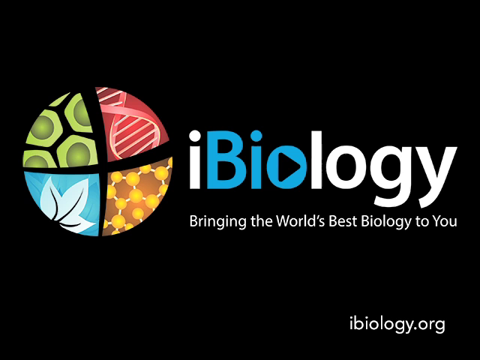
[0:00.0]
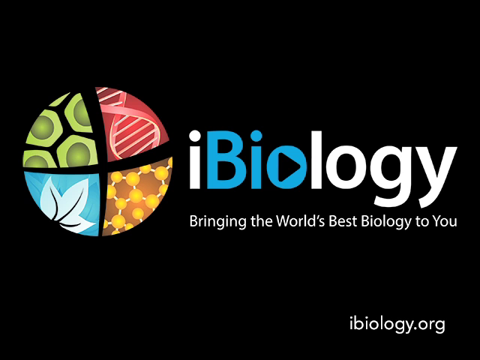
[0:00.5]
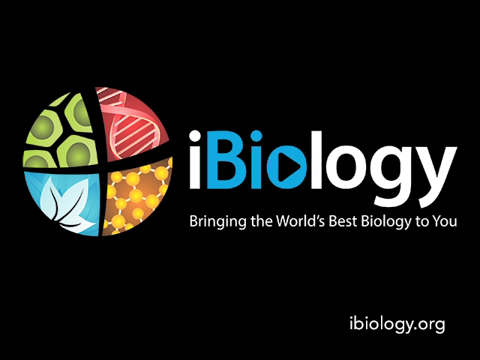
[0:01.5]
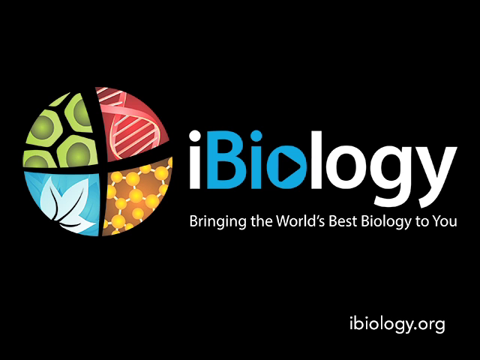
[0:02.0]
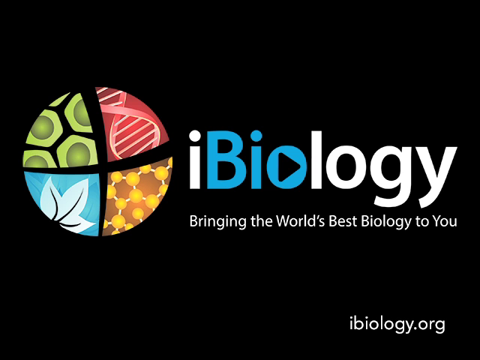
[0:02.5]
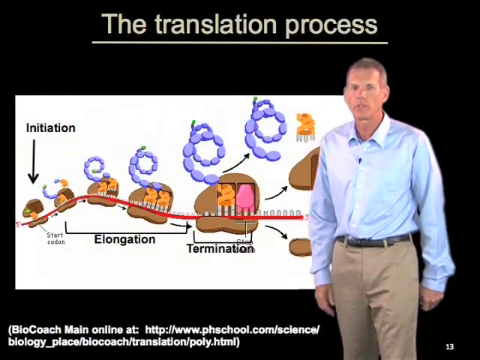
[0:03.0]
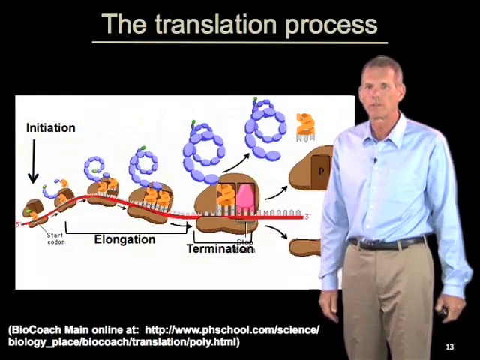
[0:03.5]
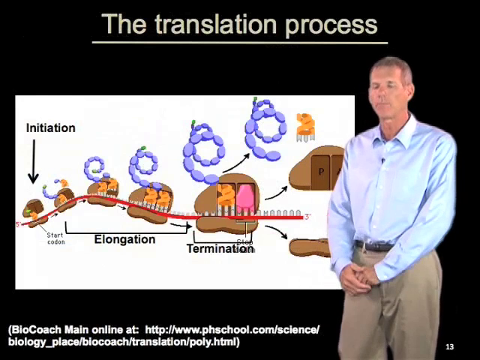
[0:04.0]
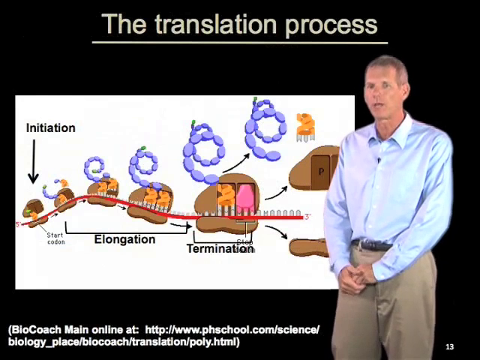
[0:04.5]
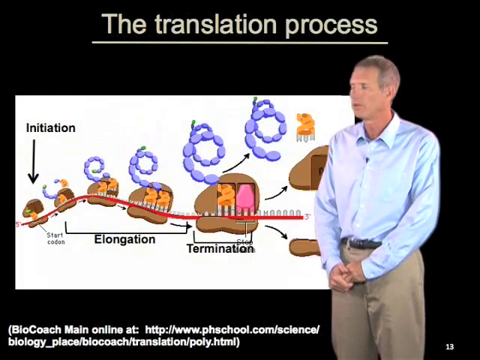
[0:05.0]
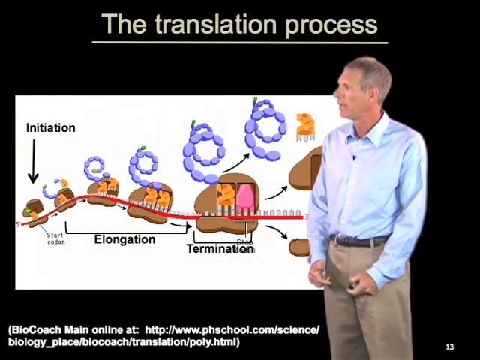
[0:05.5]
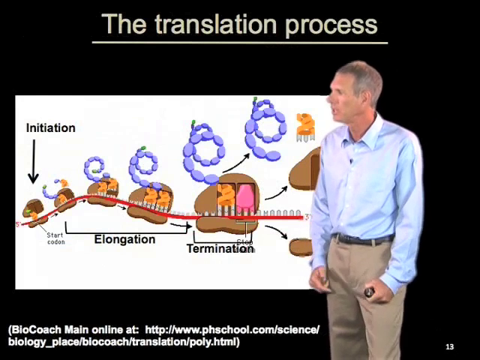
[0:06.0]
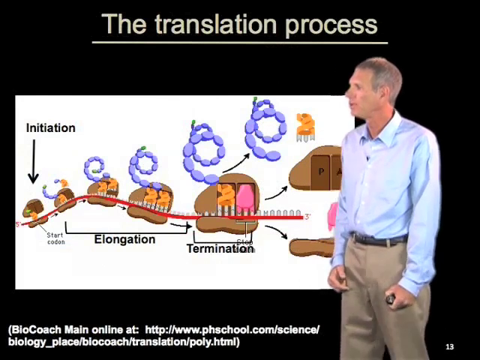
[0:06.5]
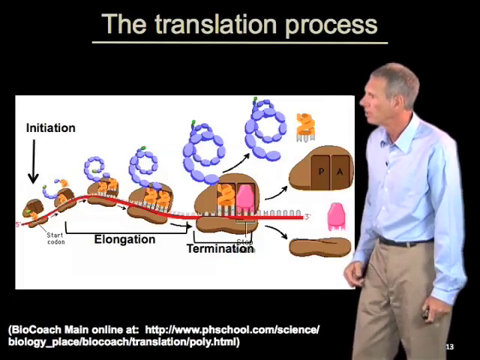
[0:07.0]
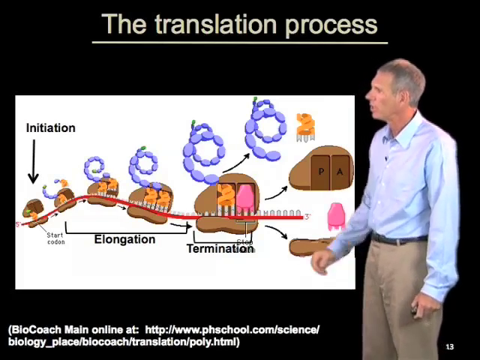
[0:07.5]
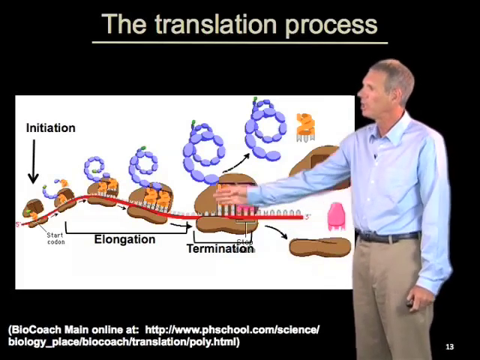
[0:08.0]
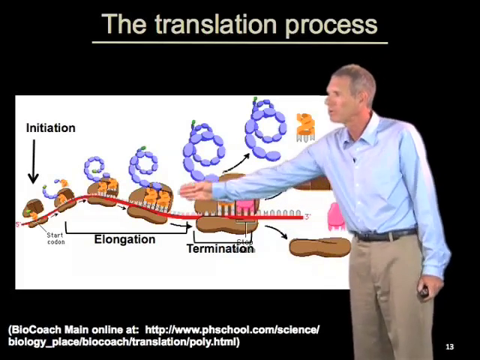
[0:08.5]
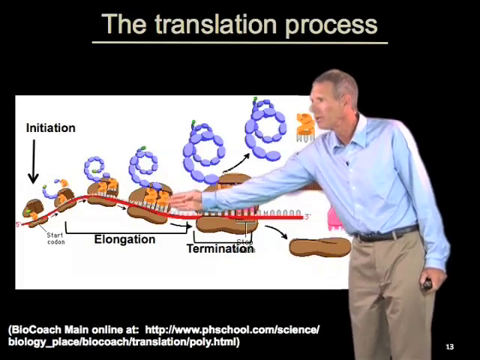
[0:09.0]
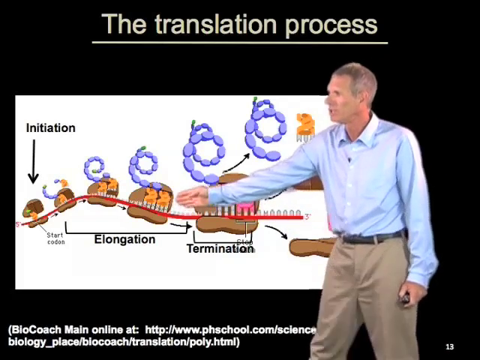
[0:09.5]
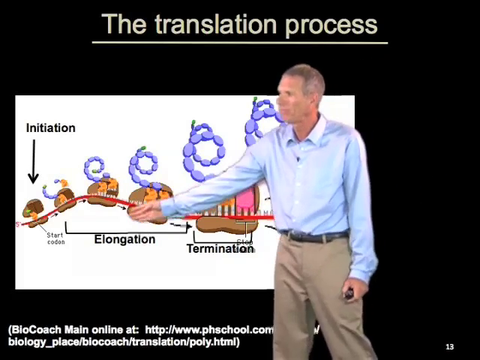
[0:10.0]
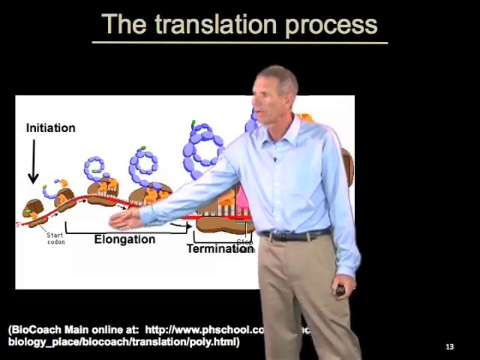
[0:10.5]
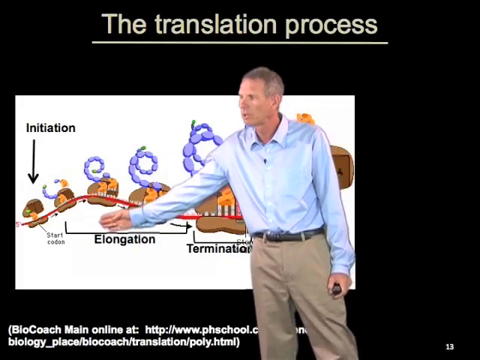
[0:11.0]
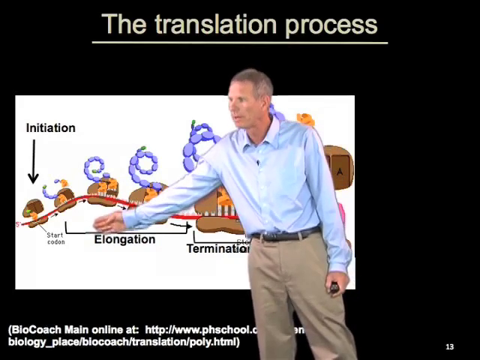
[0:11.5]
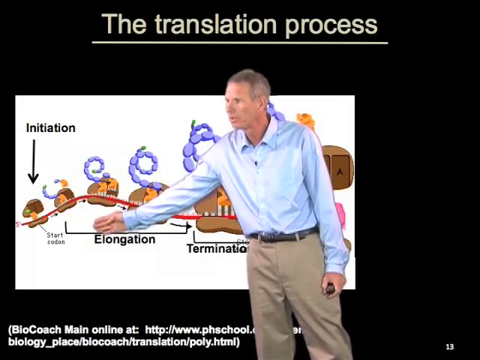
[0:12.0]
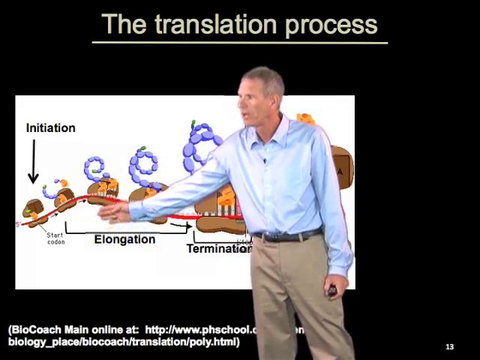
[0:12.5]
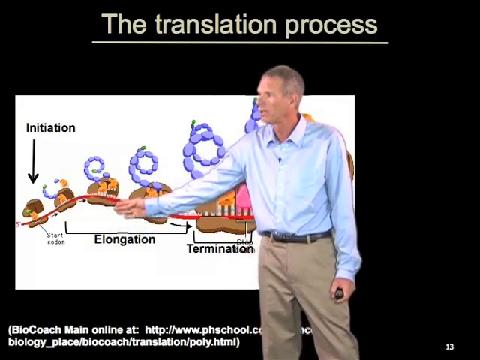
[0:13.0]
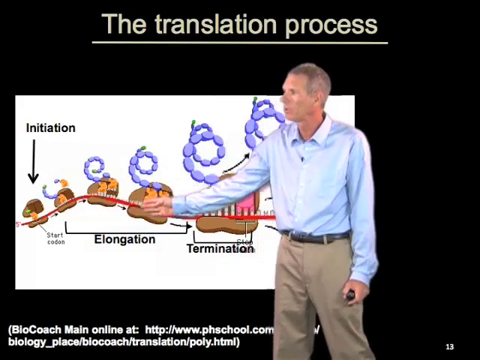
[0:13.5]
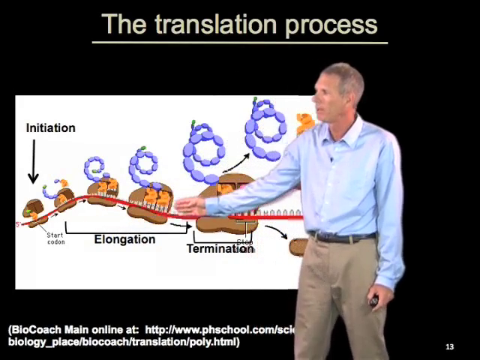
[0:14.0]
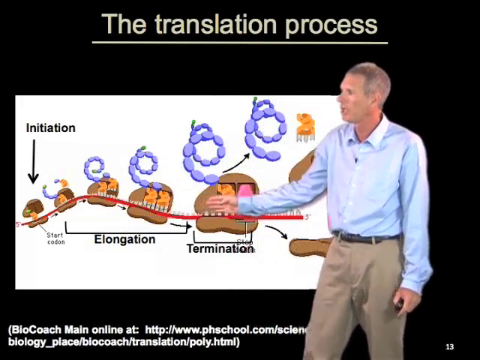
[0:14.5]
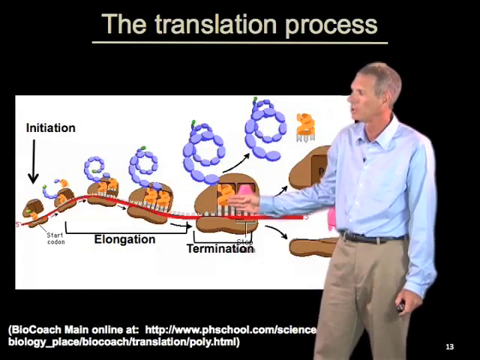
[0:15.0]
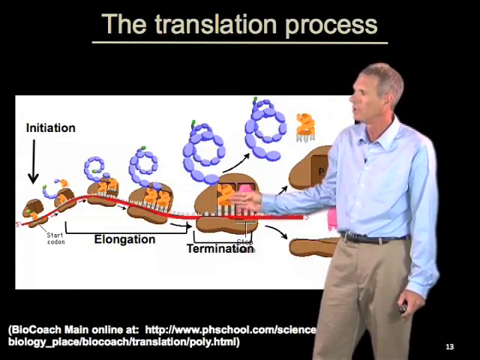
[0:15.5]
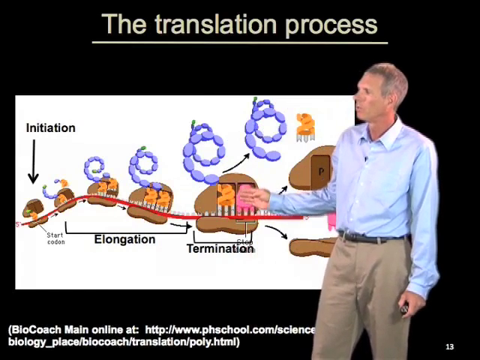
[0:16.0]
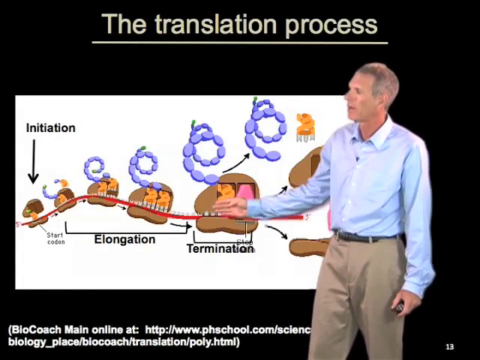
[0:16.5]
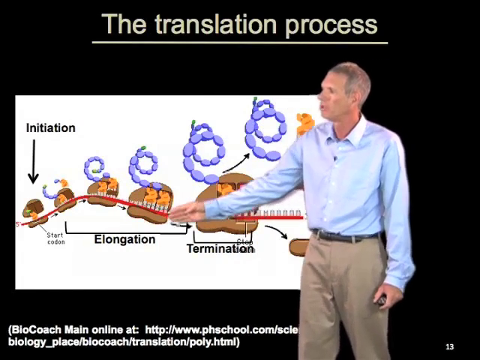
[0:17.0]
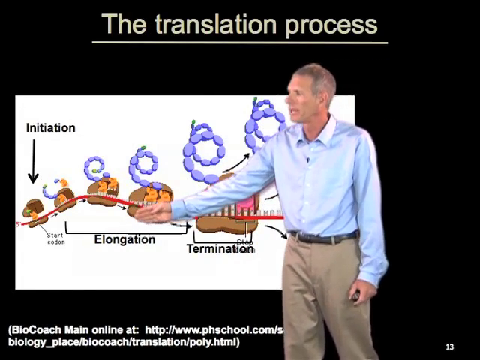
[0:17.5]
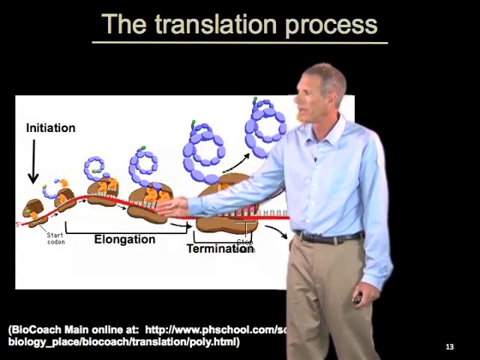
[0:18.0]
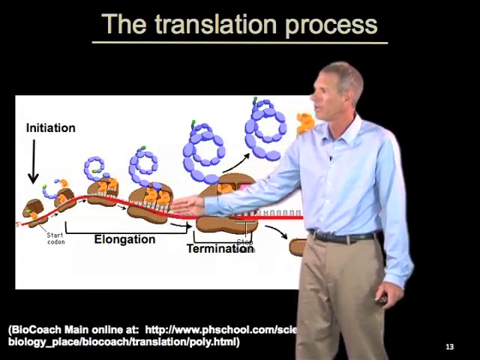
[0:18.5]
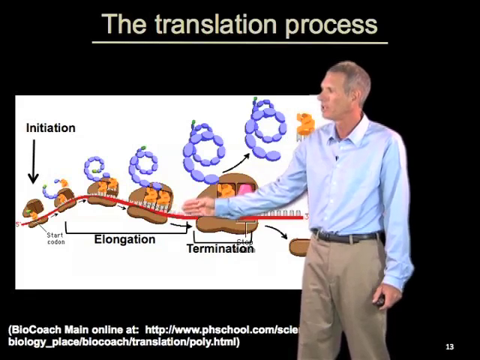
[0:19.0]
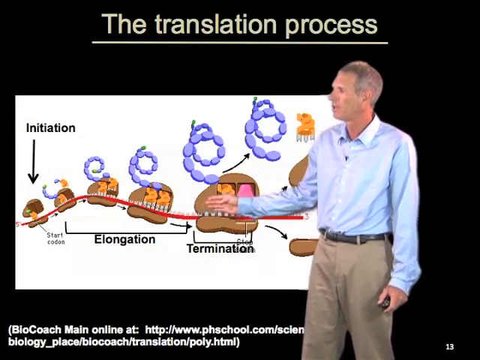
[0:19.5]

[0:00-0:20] The video opens on iBiology.org branding with the words "bringing the world's best biology to you"; the "bio" is in blue and the rest of the words are in white. There is a circle, or maybe a sphere, divided into images: in the top right corner what looks like a DNA strand, in the bottom right corner what looks like molecules connected together, in the bottom left corner what looks like a blue background with a flower and some black in it, and in the top left corner what looks like a whole bunch of avocados. The bio coach segment then begins, on the translation process. A picture diagram shows sections labeled "initiation," then "elongation," then "termination." A man, apparently standing, wears khaki pants and a blue long-sleeve shirt; he is white with short hair and holds a clicker in his left hand. He points out the initiation, the elongation and then the termination, goes back to the elongation, and runs his hand along the line of the process.